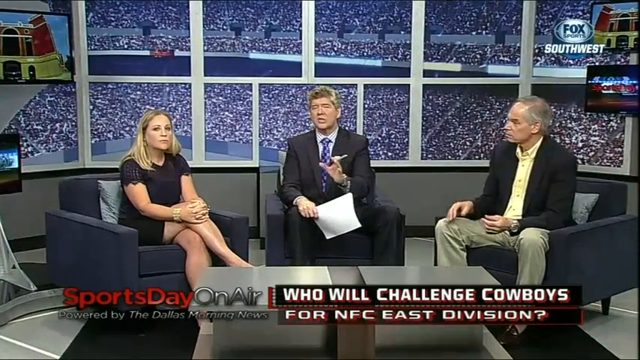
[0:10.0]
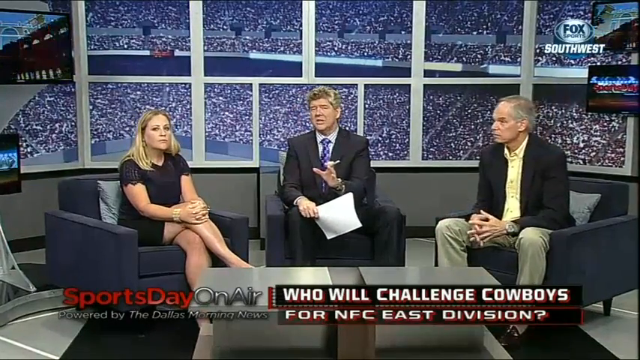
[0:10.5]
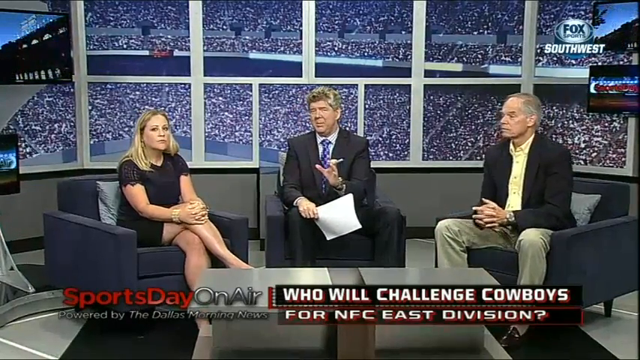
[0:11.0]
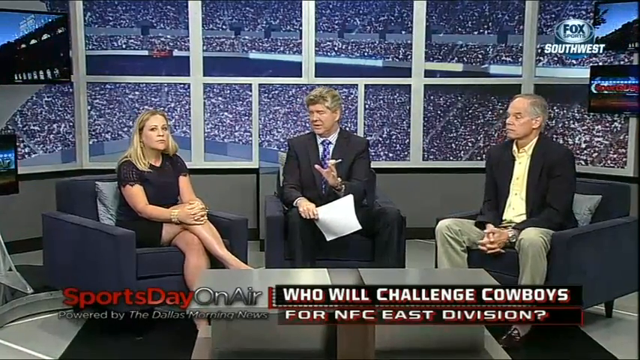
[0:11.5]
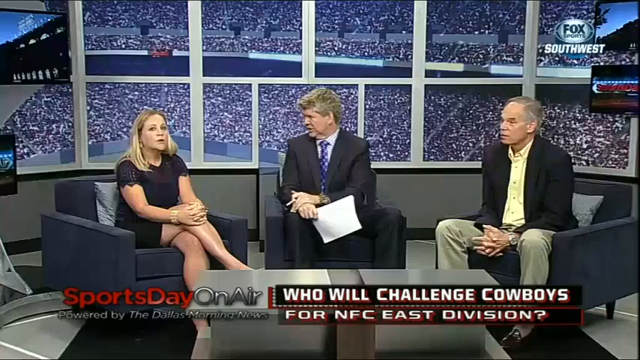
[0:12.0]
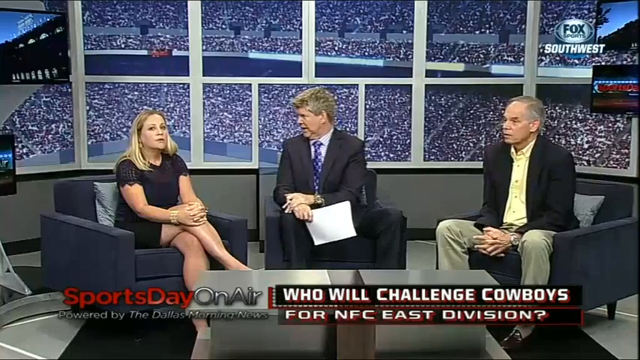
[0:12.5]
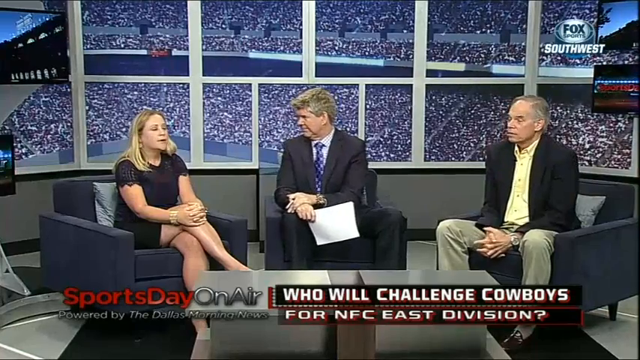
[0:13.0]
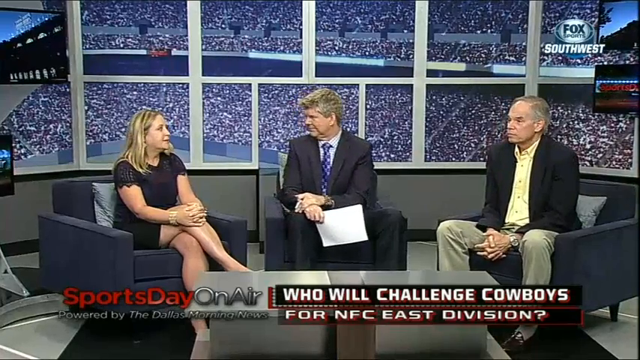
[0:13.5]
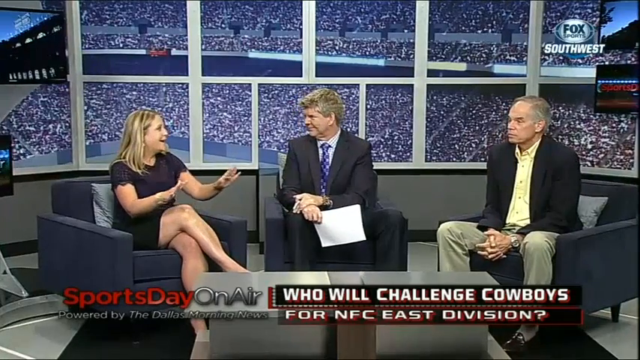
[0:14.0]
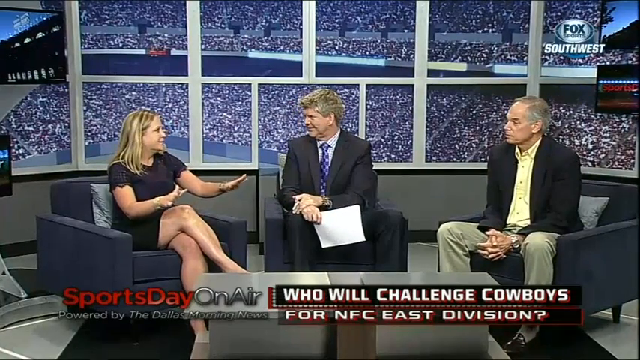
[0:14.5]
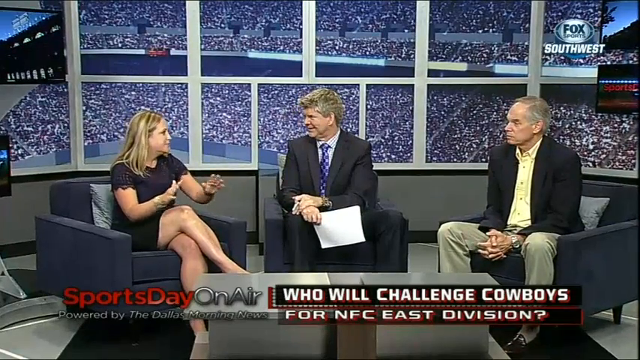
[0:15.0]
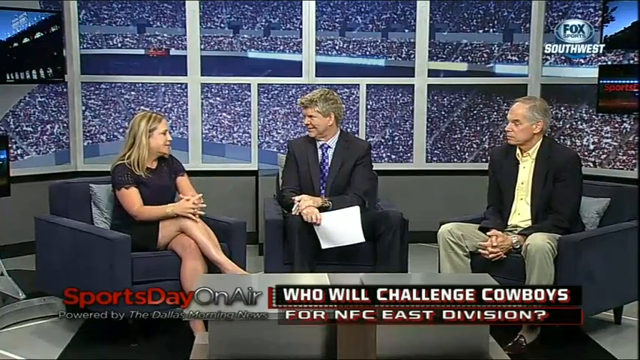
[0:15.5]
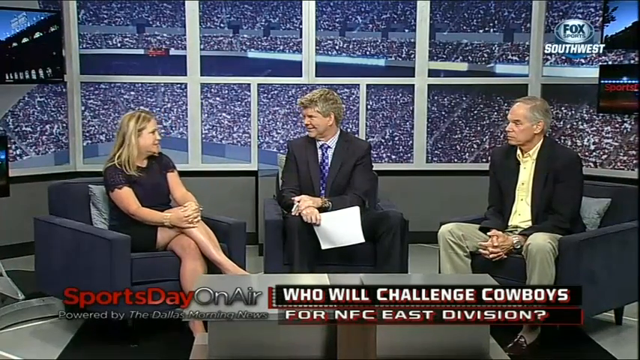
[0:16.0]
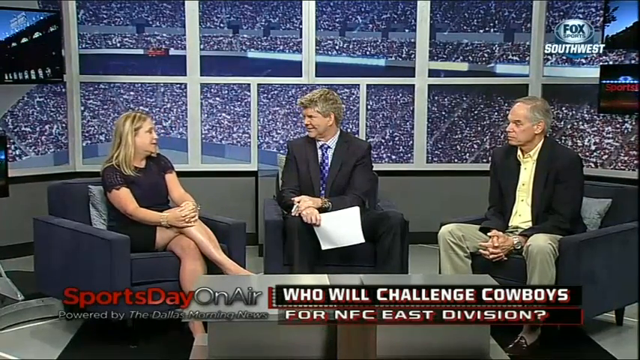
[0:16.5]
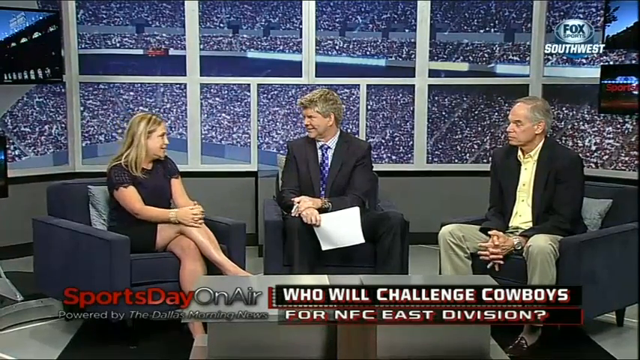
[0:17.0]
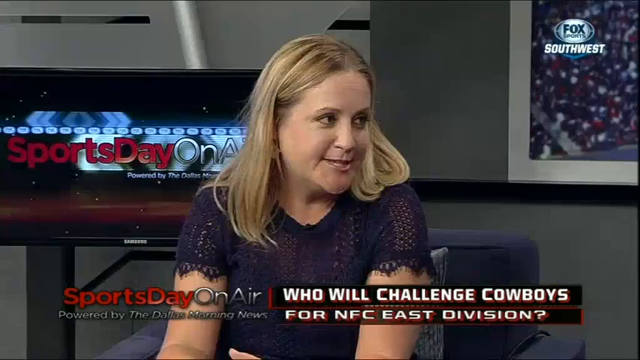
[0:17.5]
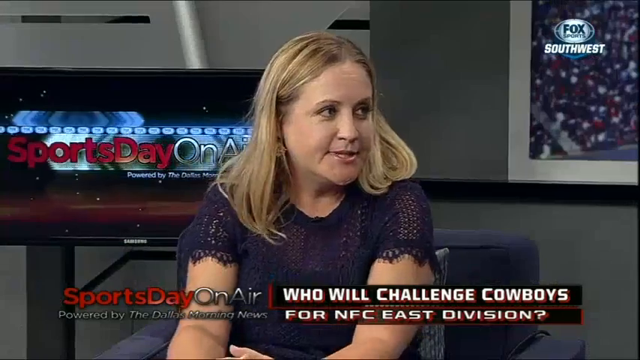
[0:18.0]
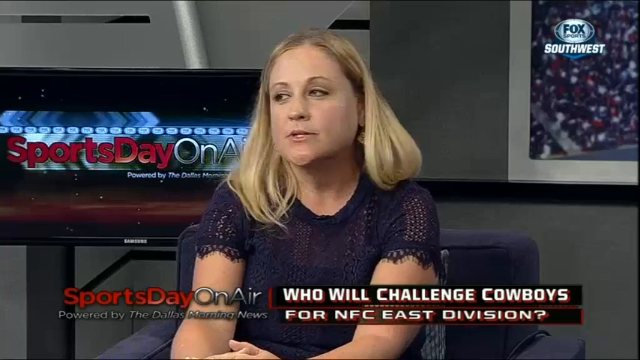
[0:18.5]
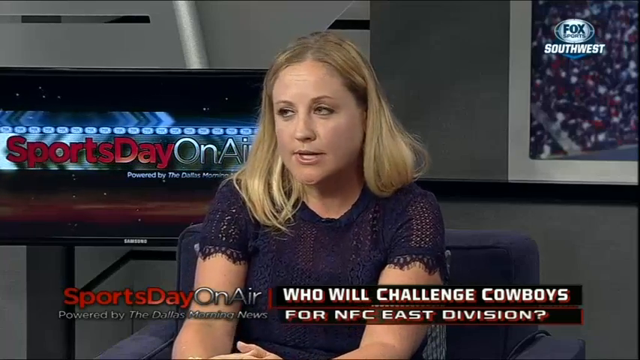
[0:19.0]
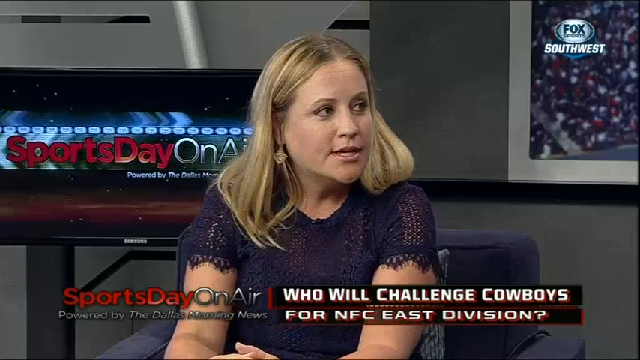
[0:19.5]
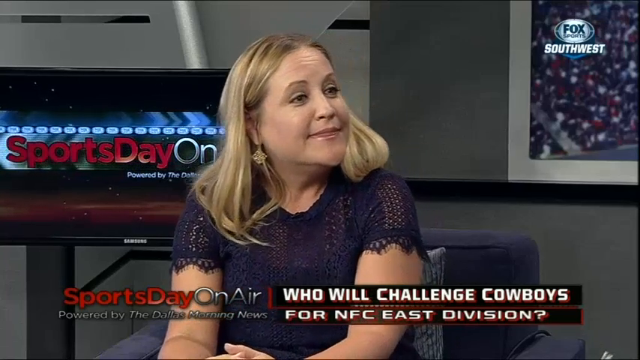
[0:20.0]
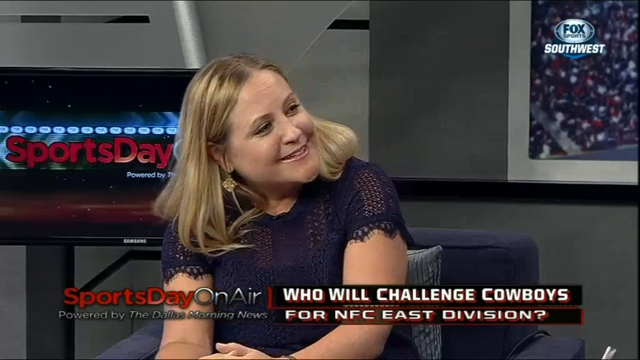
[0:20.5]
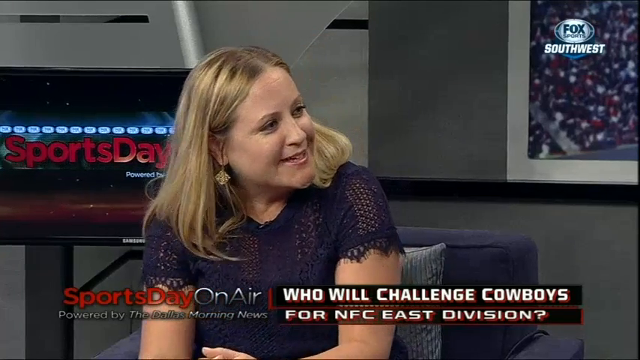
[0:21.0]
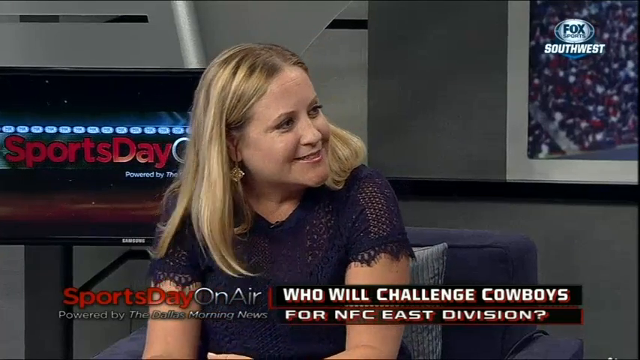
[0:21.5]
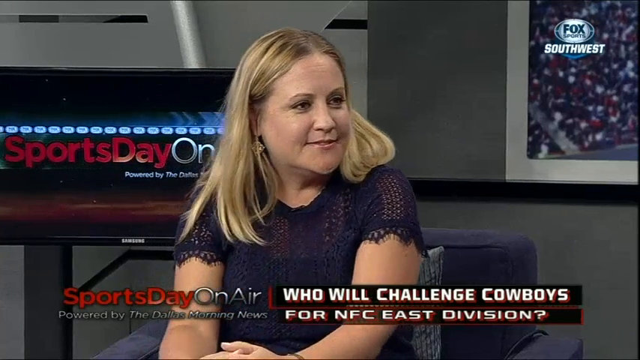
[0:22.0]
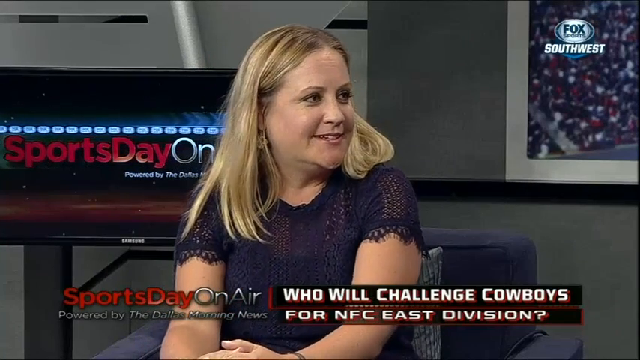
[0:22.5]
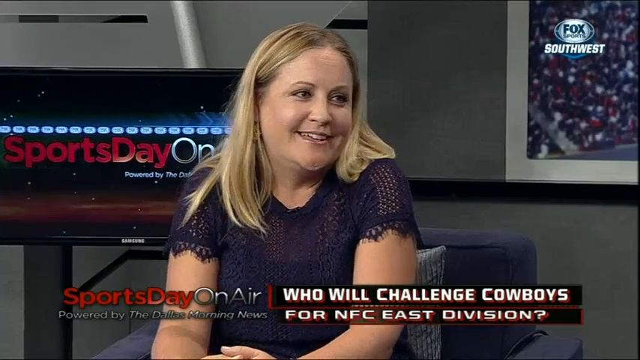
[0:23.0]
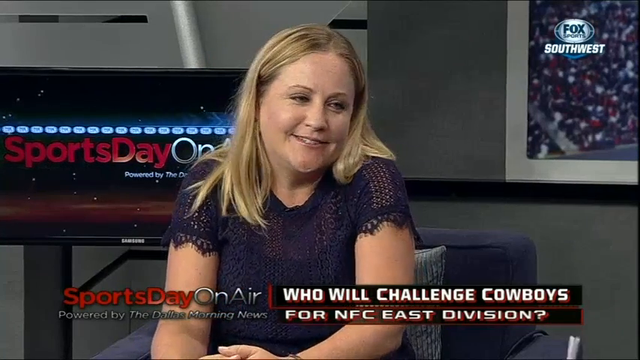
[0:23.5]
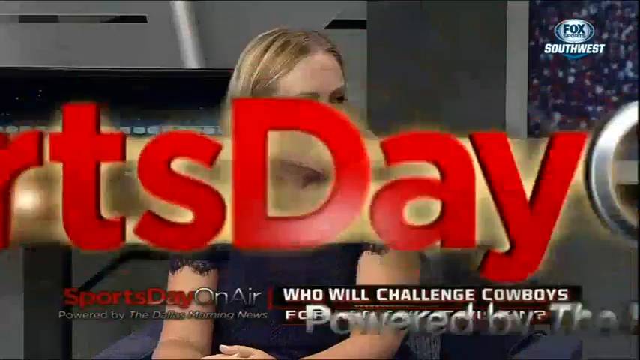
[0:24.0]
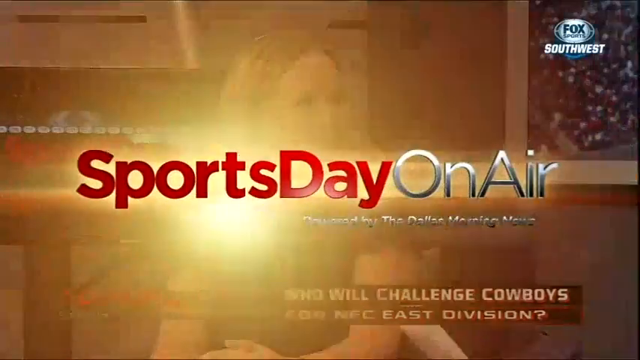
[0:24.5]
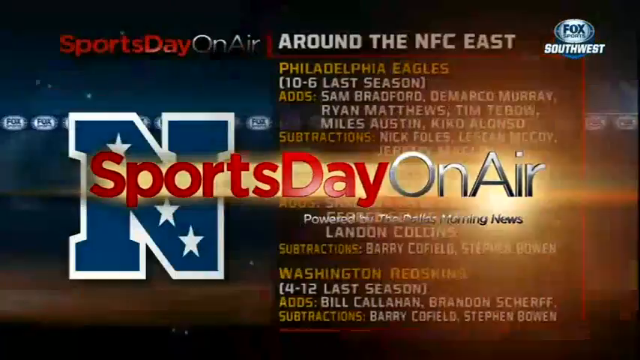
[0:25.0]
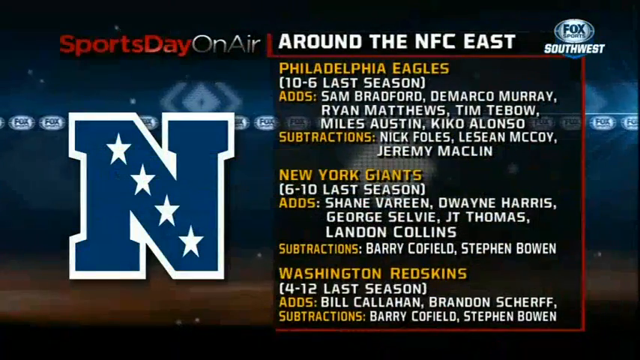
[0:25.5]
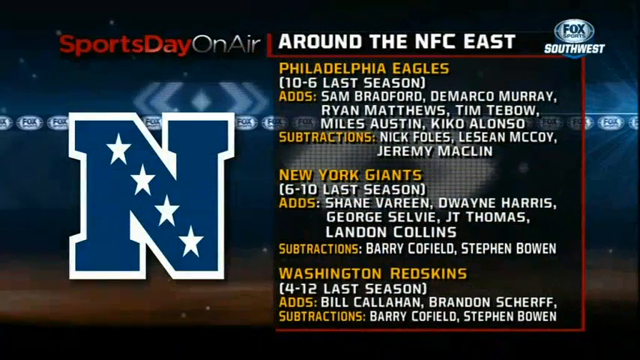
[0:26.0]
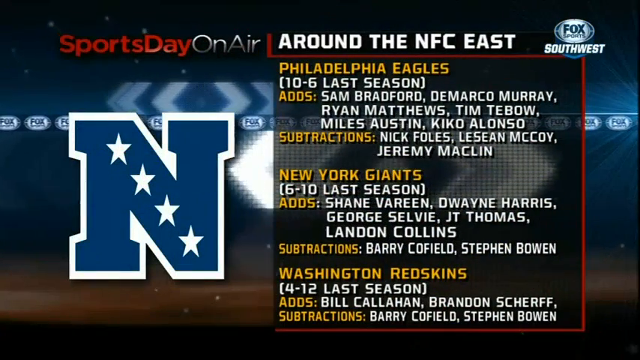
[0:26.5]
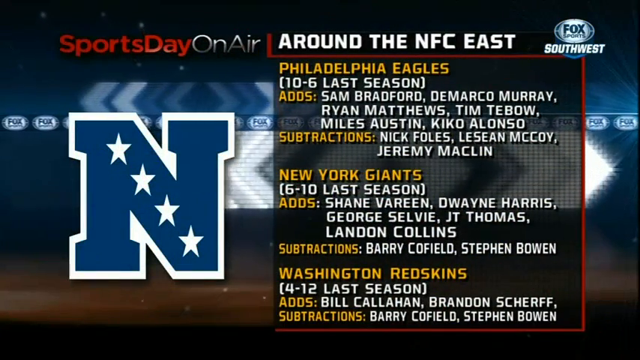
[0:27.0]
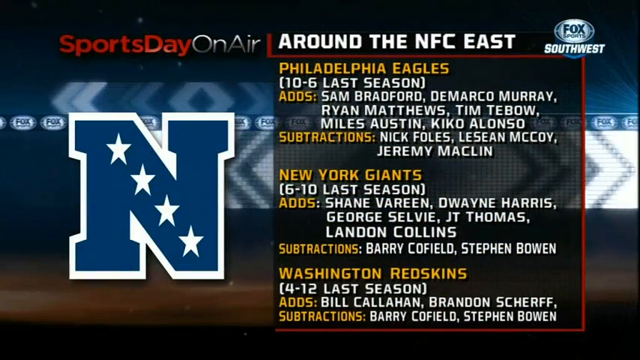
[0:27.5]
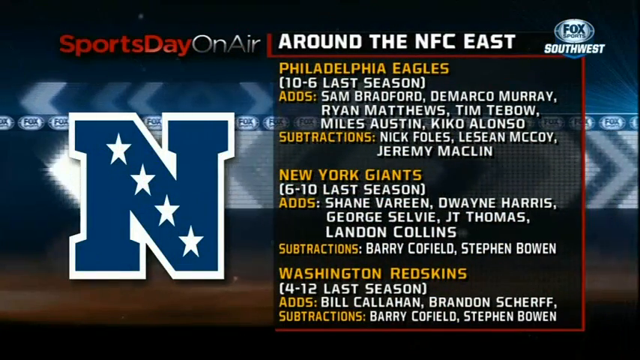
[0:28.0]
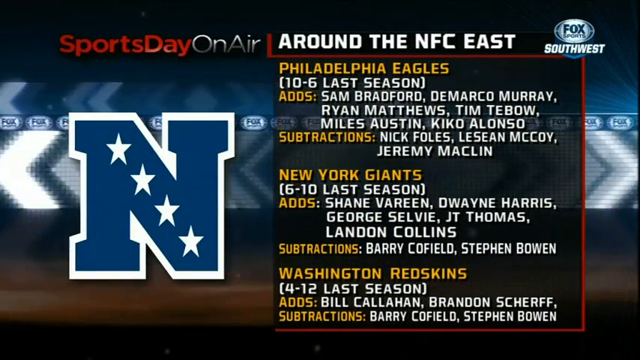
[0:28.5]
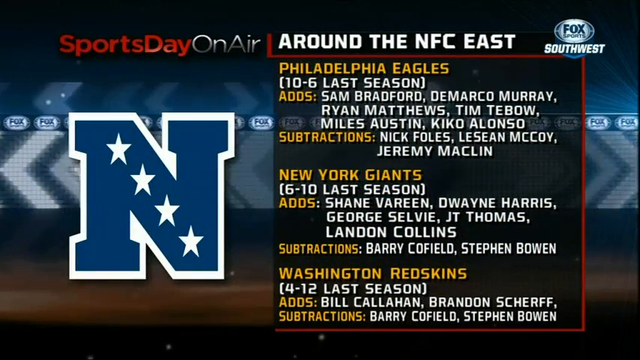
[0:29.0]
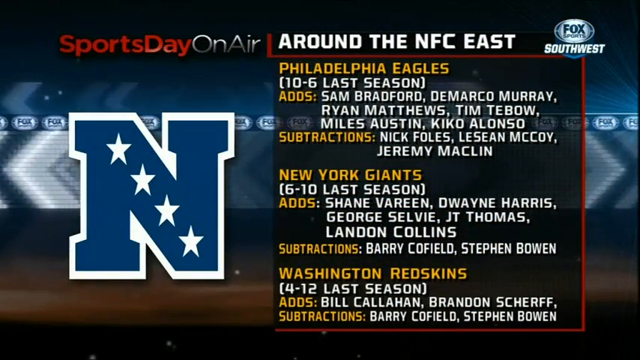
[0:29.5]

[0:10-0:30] The man in the middle faces the woman and talks to her. The woman has both hands laced together on her left knee, which is crossed over her right leg. The view transitions to an infographic with a big N logo on the left side and the words "around the NFC east" on the right side. It lists stats for the Philadelphia Eagles, New York Giants and Washington Redskins, including 10 to 6 last season, and shows the players each team added and the subtractions they made. A caption at the bottom reads "who will challenge Cowboys for NFC east division." Back in the studio, the man to the left of the center man has both hands on his knees and is also listening to the woman. Once the woman starts talking, the camera moves to a close-up of her; behind her, another monitor shows the Sports Day on Air logo replaying.